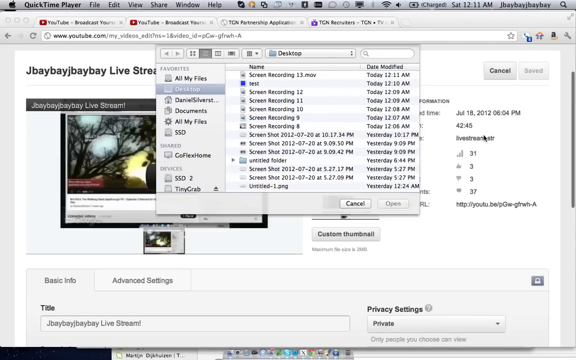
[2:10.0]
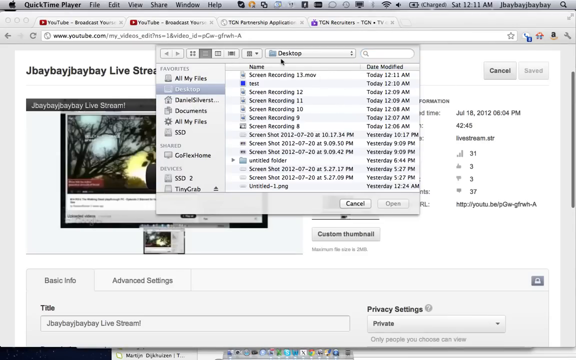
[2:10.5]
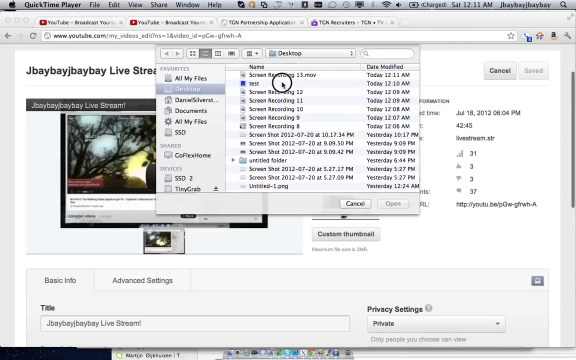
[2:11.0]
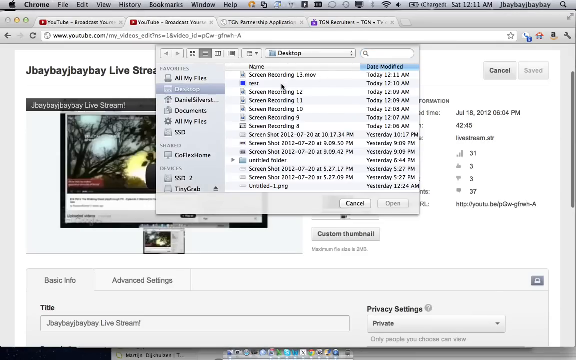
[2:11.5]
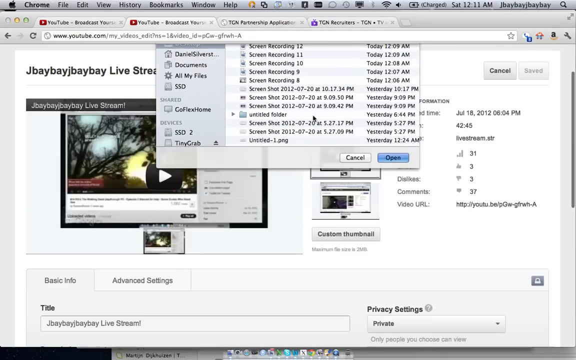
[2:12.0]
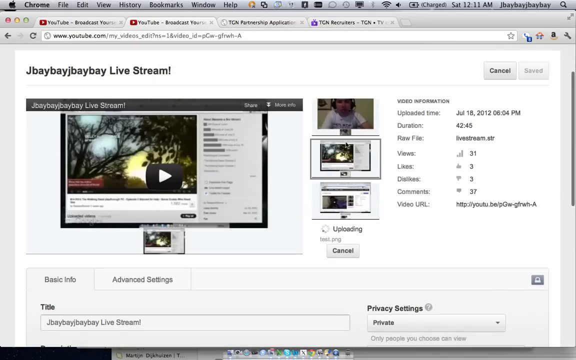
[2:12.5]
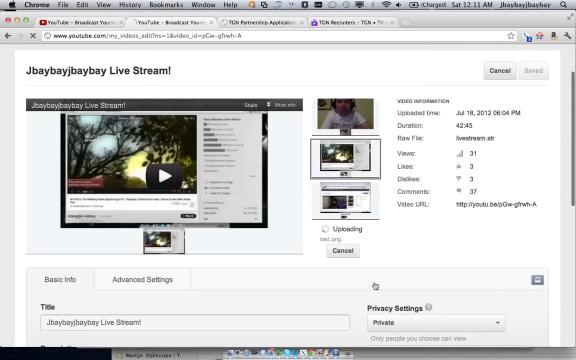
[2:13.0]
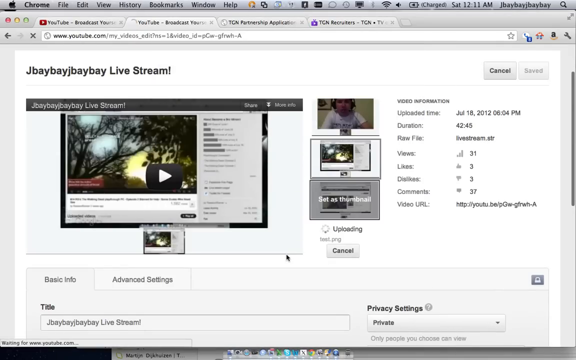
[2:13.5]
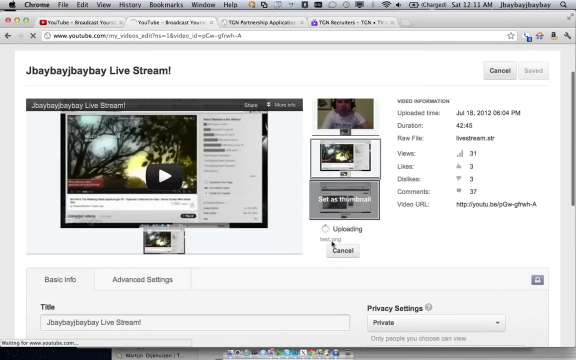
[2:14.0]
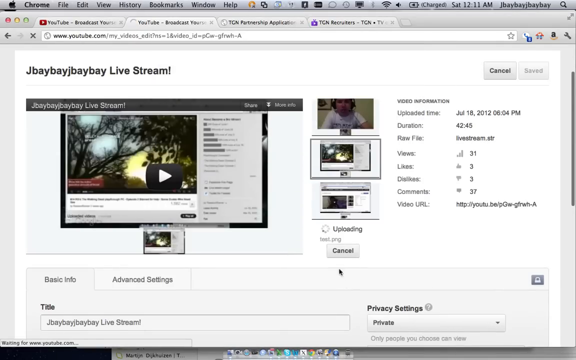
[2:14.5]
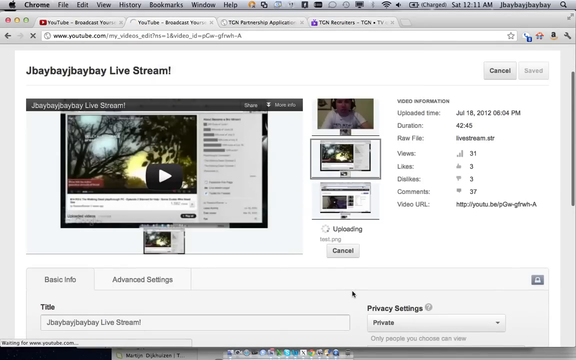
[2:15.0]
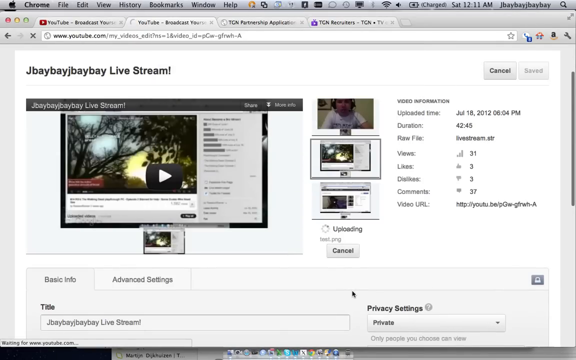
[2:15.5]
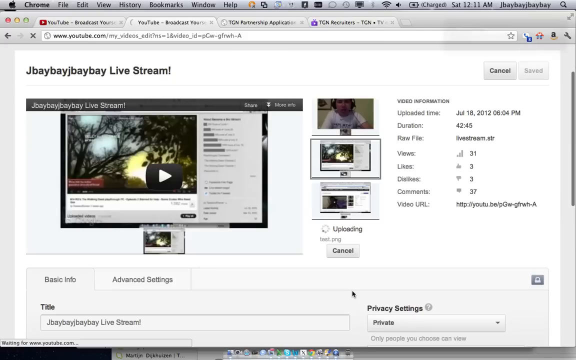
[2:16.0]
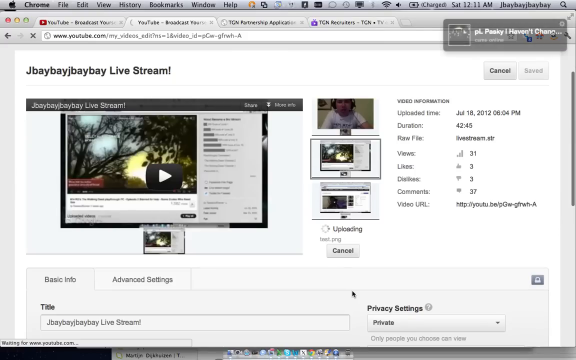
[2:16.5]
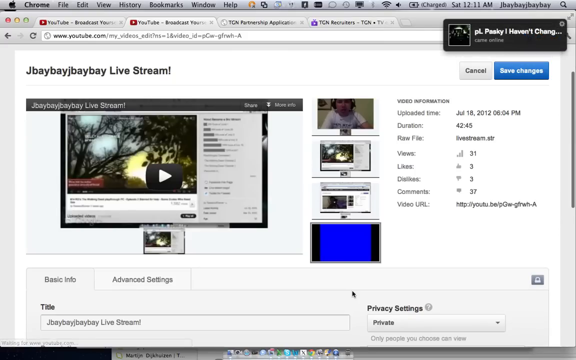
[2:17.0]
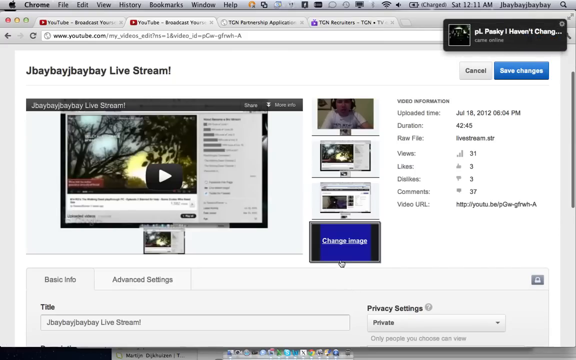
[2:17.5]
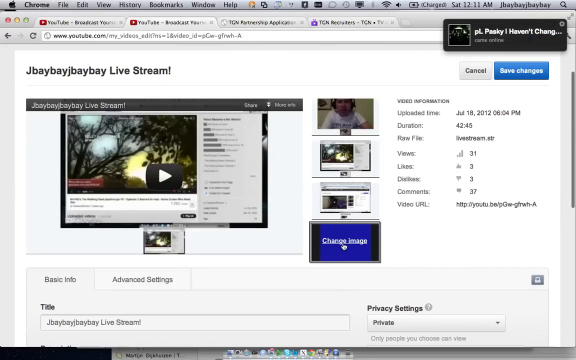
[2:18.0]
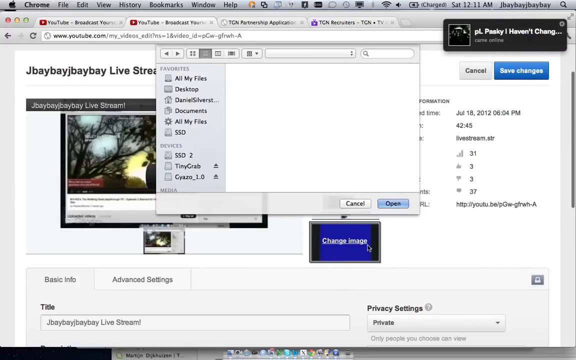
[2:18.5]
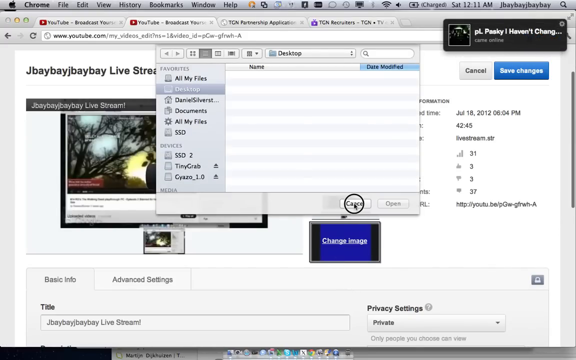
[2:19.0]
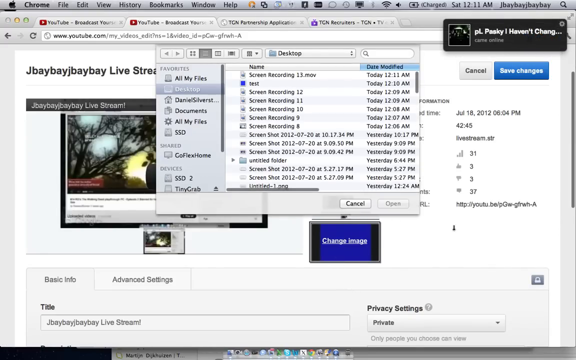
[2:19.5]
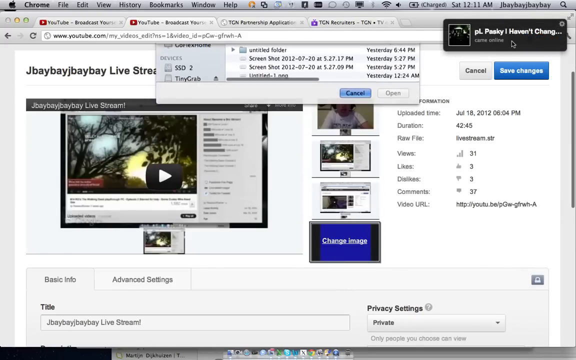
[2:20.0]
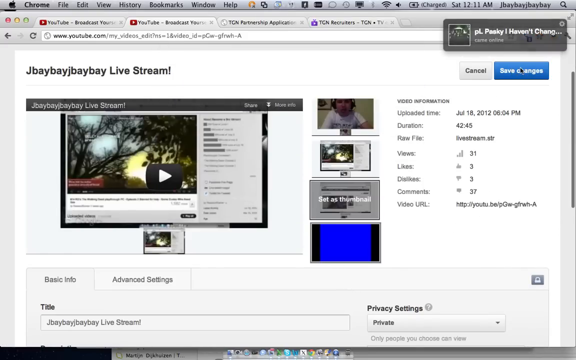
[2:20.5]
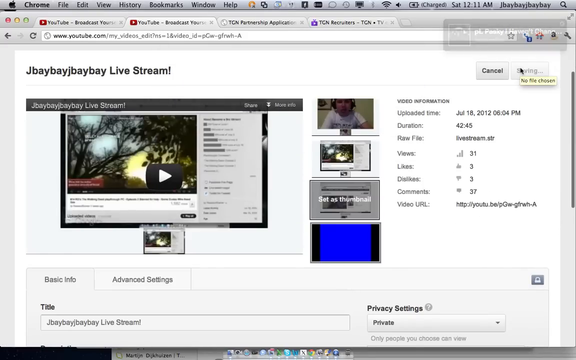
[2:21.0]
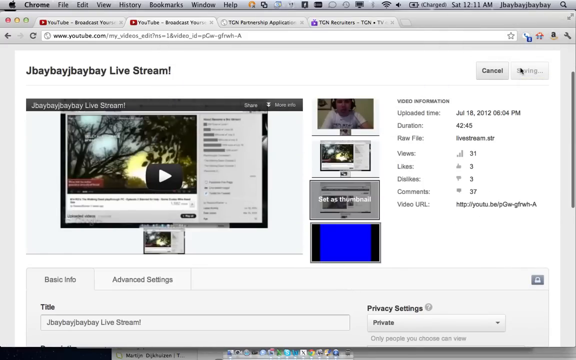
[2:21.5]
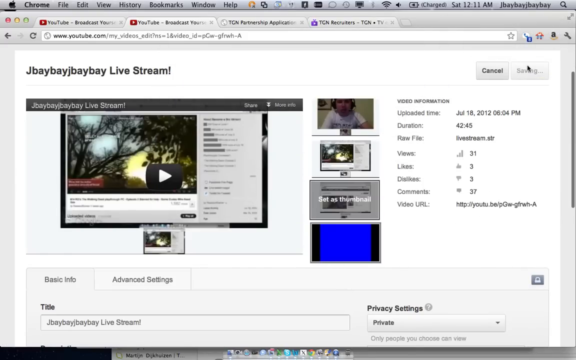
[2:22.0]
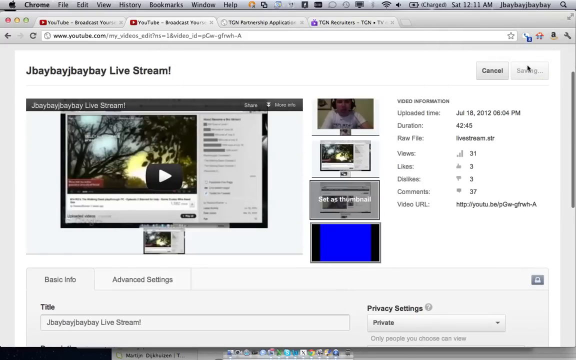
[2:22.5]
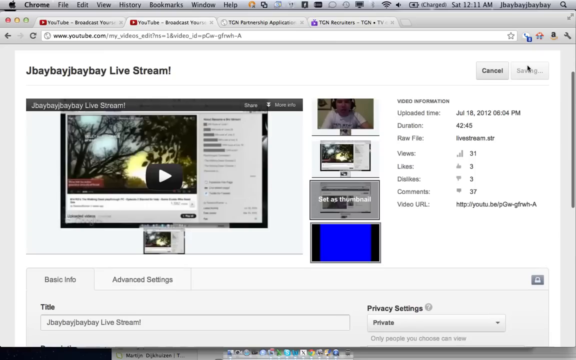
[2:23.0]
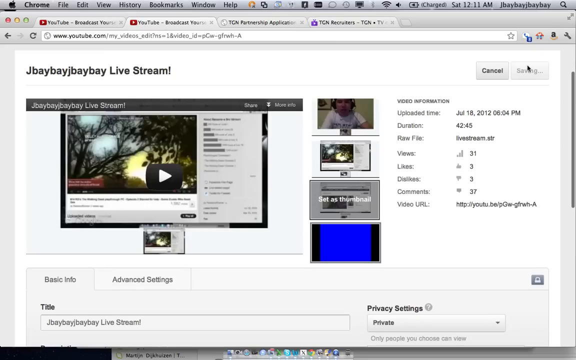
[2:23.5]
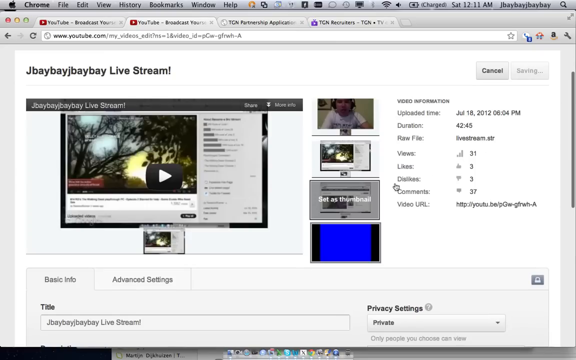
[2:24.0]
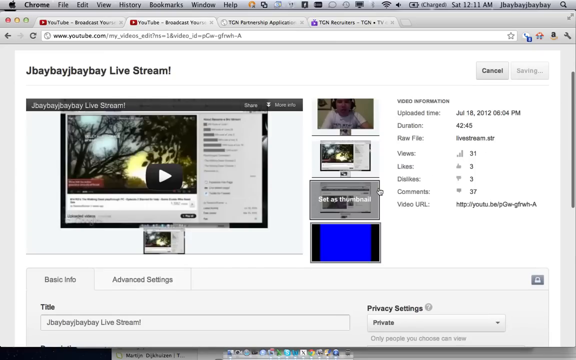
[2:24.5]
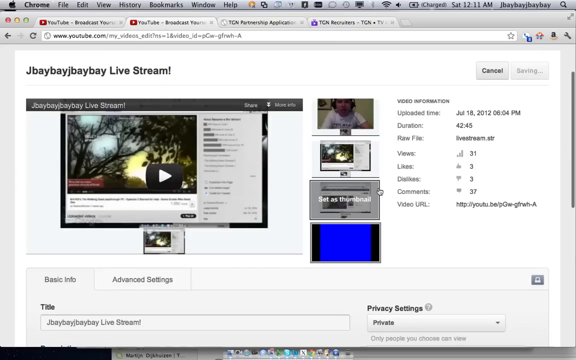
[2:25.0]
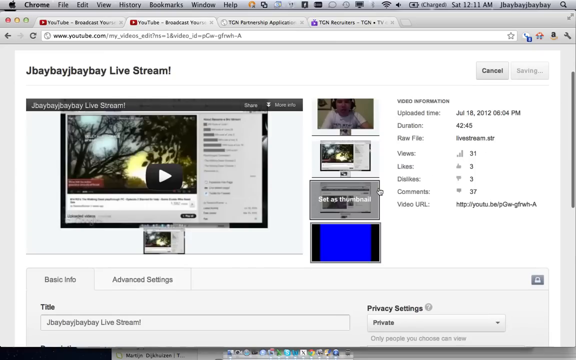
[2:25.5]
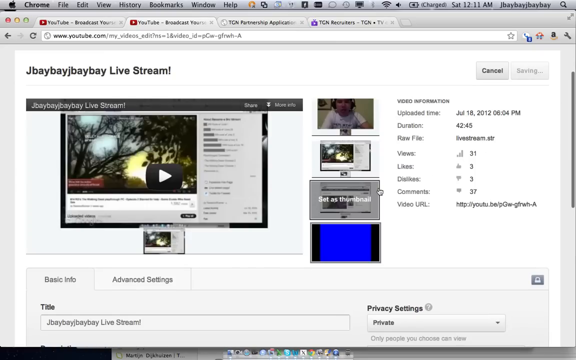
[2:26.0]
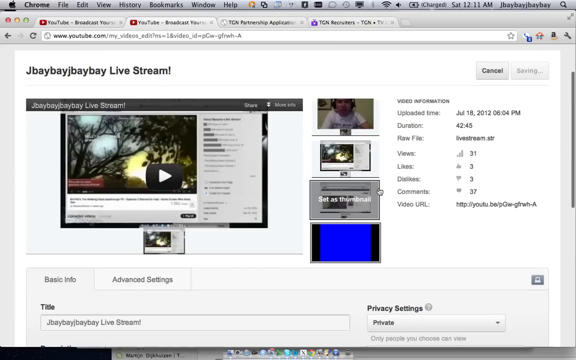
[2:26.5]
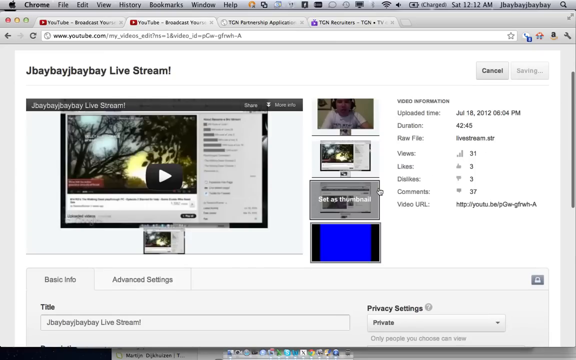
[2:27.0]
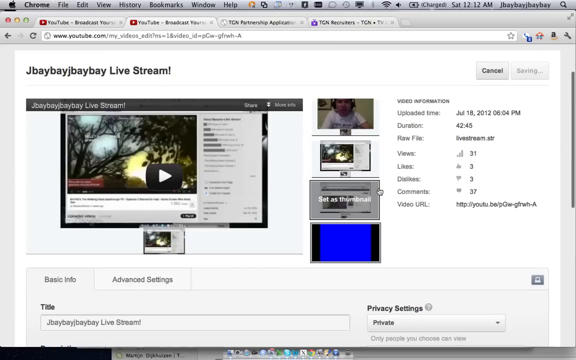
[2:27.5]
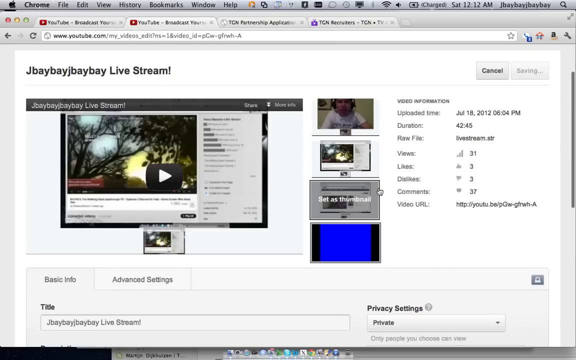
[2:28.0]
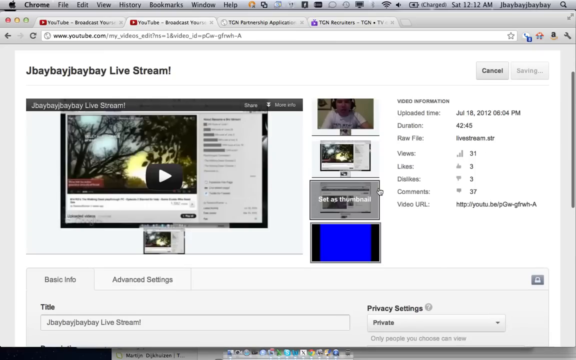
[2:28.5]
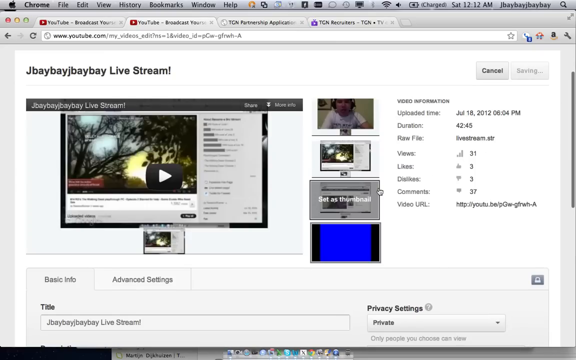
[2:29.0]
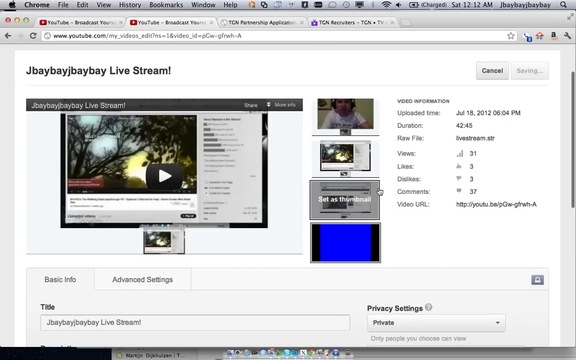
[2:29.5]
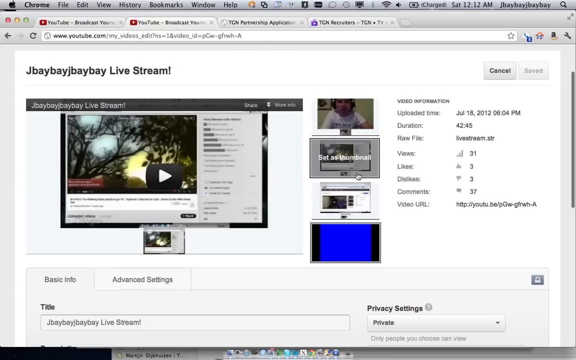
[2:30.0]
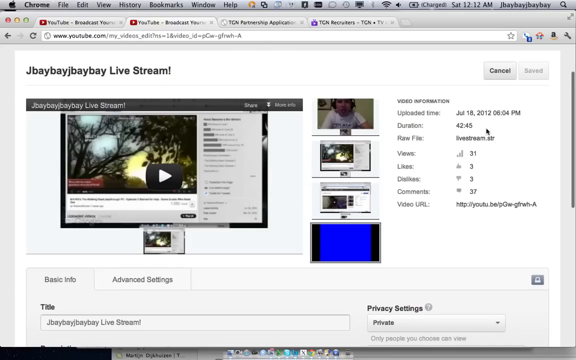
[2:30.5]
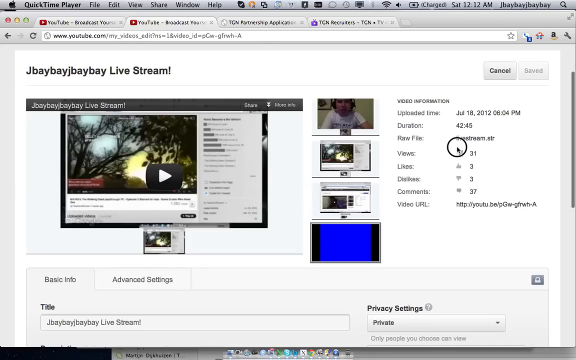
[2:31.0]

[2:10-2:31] Something happens with the search box. The cursor selects the test file that was created, and the file is uploaded, its image is changed, and it is saved. On a screen with a number of videos, a video is selected, and the options "change image", "test", "save changes" and "Set as thumbnail" are used. The live stream currently shows a still shot of nature: a tree off in the distance and a bright sky, with trees obscuring the sky. Advanced settings and privacy settings are shown, set to private. The title is "Jbebe Jbebe live stream", and the video has a URL. A notification pops up, apparently indicating that someone the account follows has come online.